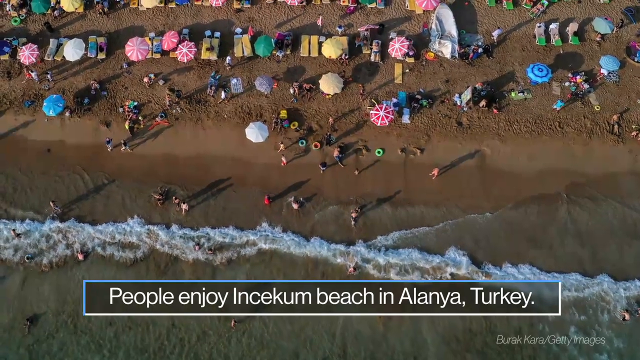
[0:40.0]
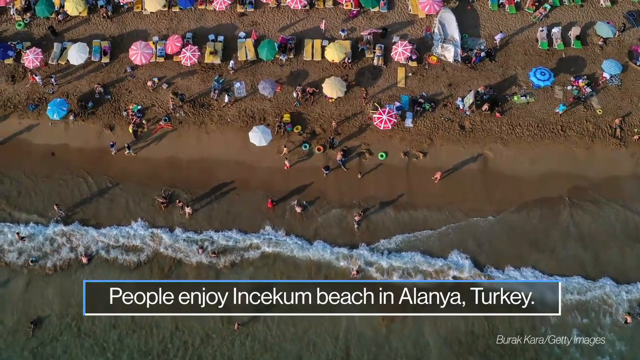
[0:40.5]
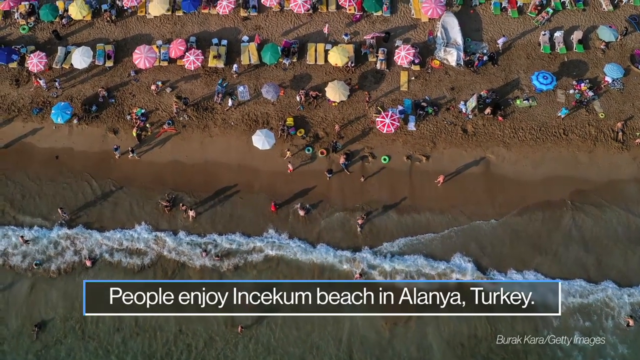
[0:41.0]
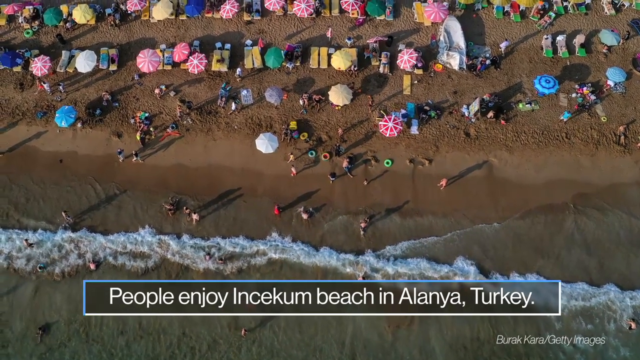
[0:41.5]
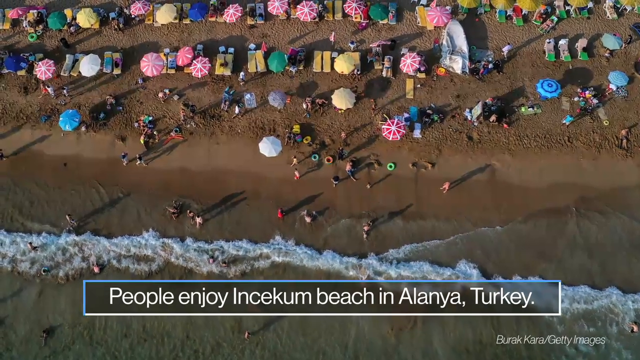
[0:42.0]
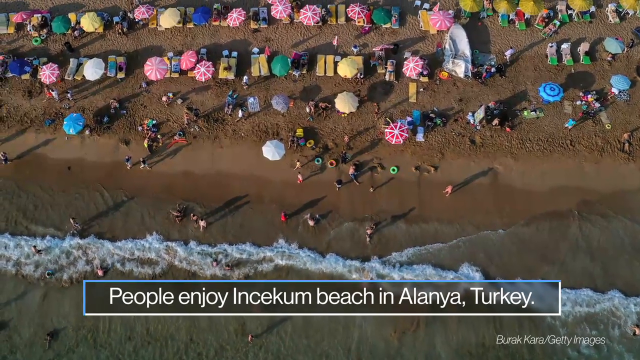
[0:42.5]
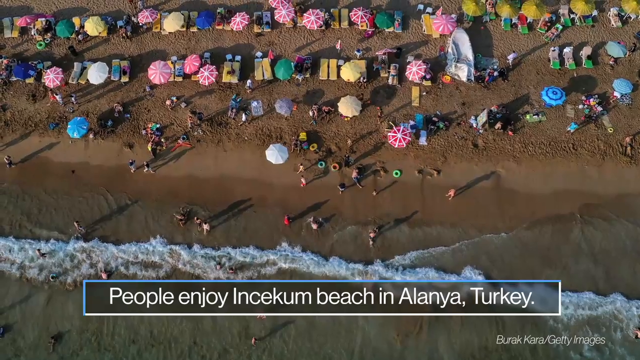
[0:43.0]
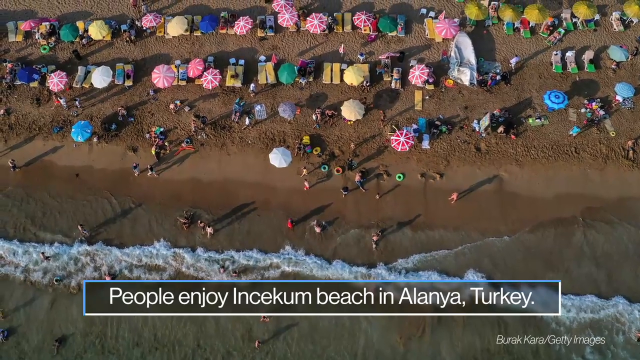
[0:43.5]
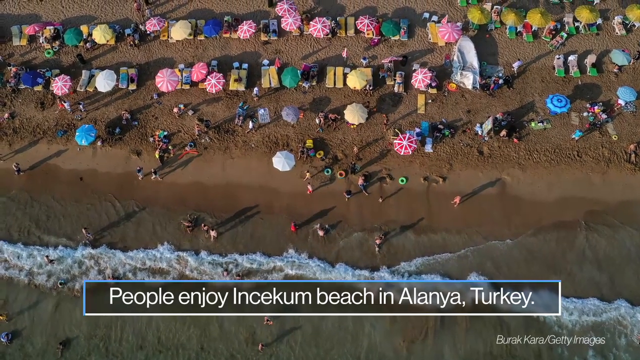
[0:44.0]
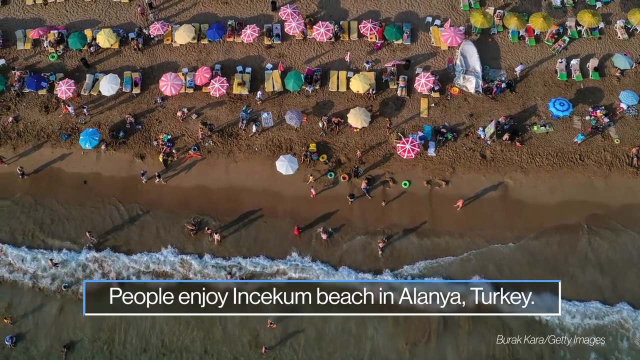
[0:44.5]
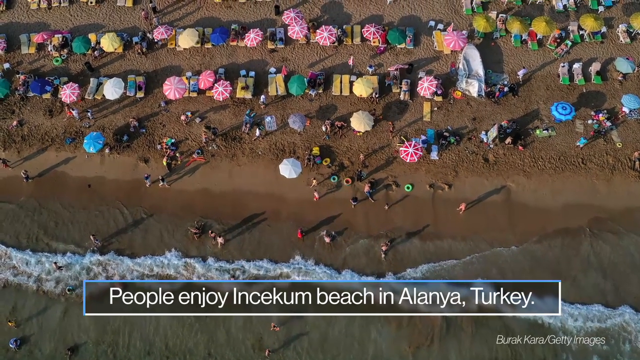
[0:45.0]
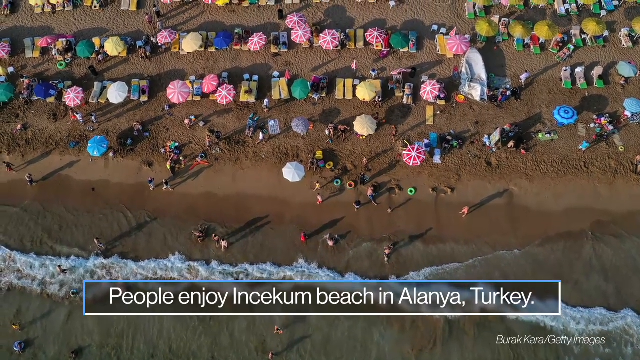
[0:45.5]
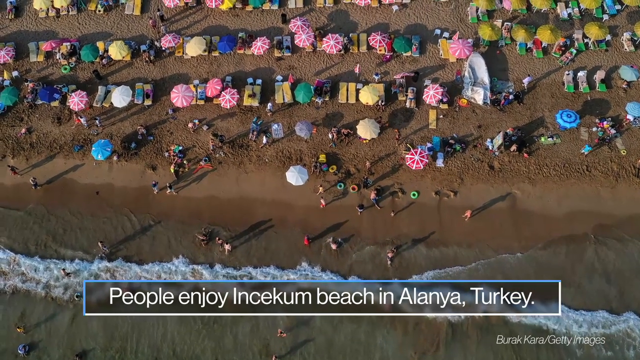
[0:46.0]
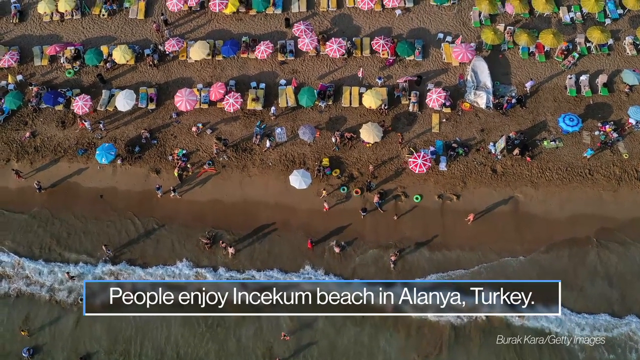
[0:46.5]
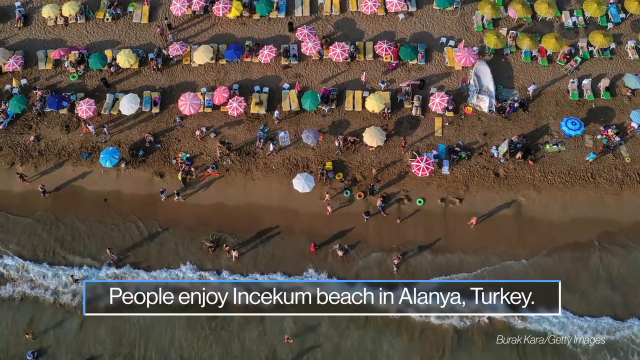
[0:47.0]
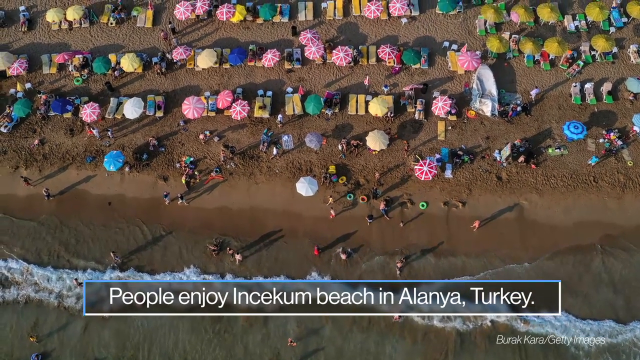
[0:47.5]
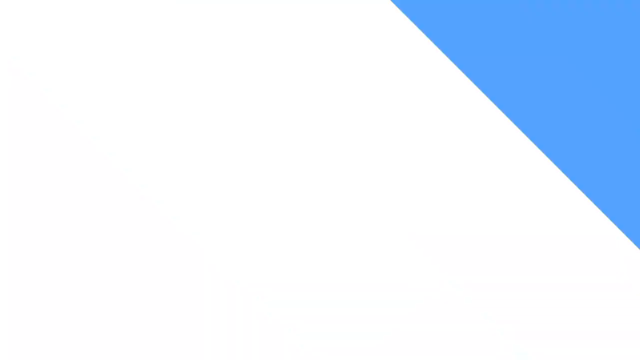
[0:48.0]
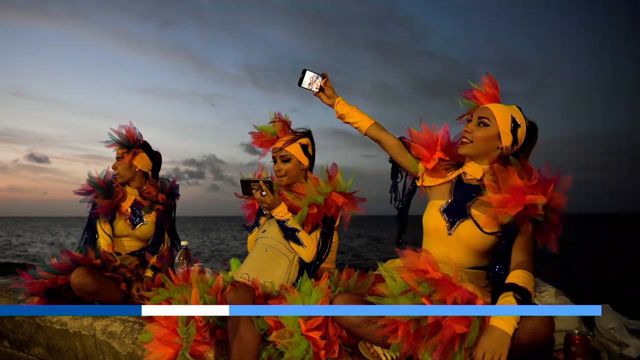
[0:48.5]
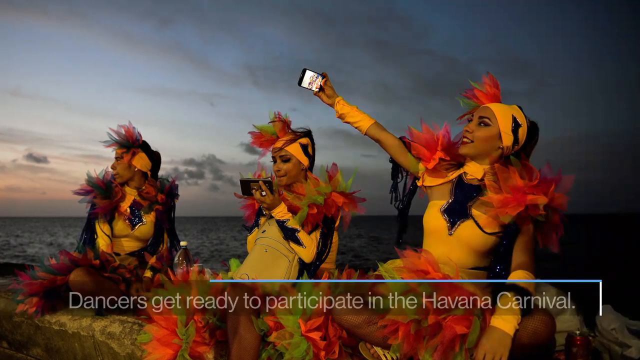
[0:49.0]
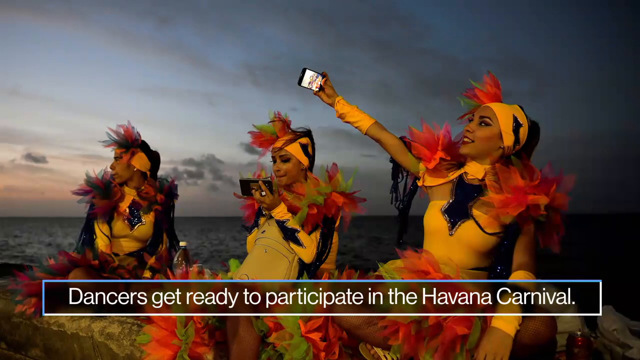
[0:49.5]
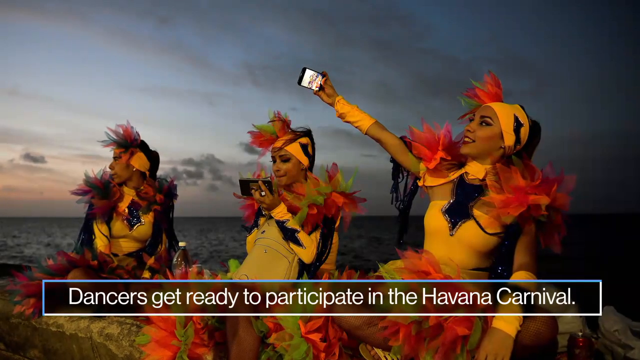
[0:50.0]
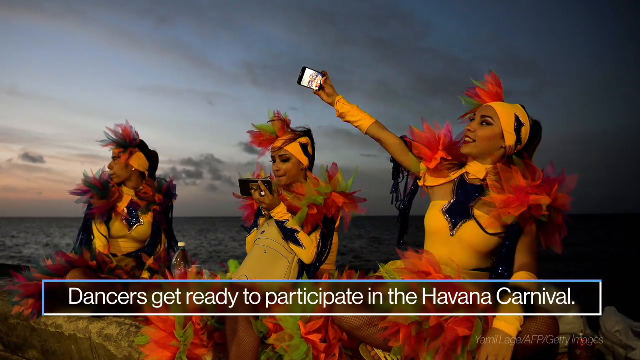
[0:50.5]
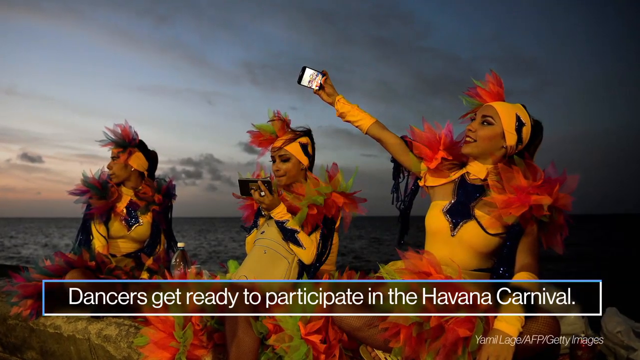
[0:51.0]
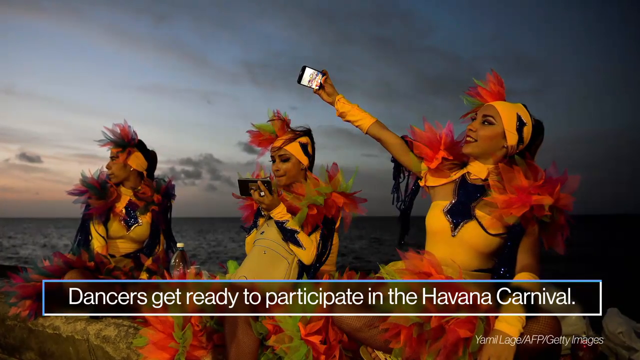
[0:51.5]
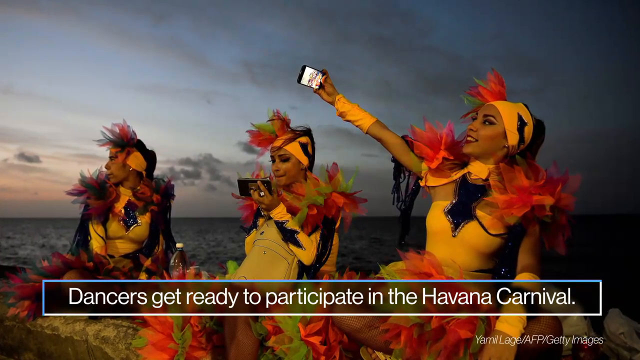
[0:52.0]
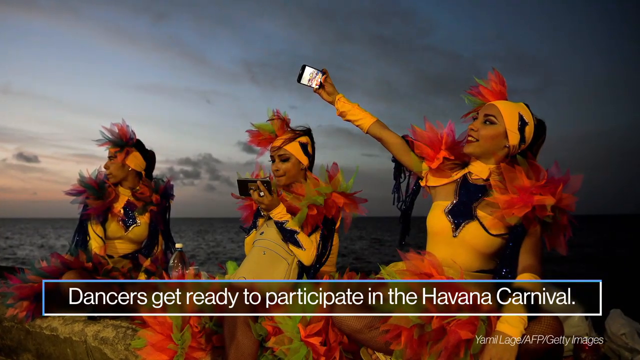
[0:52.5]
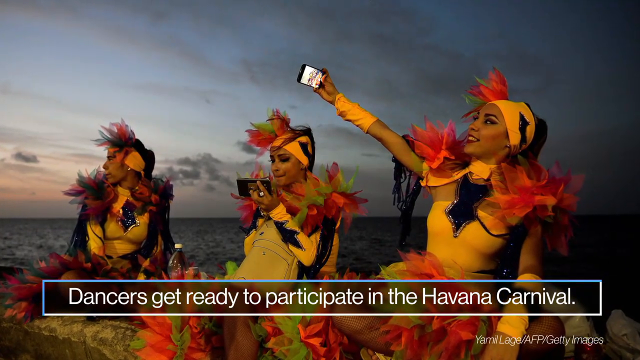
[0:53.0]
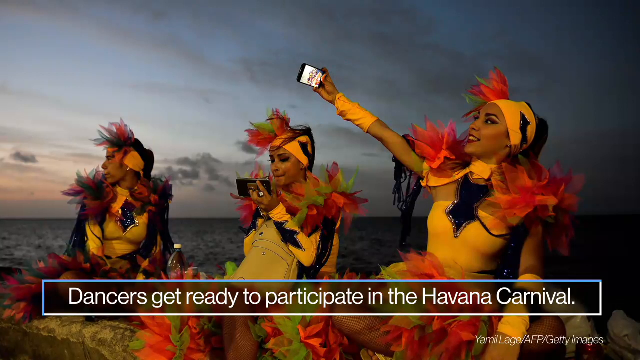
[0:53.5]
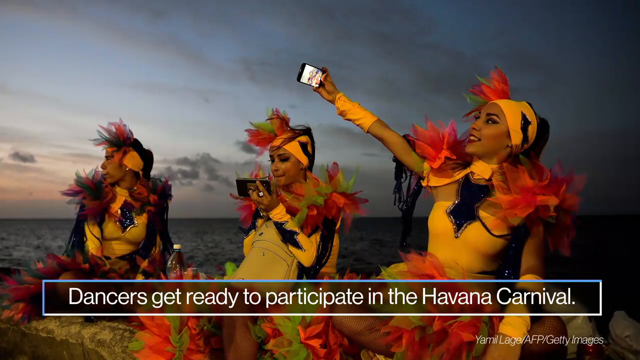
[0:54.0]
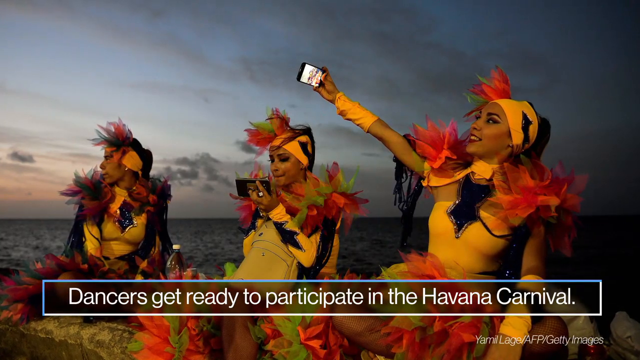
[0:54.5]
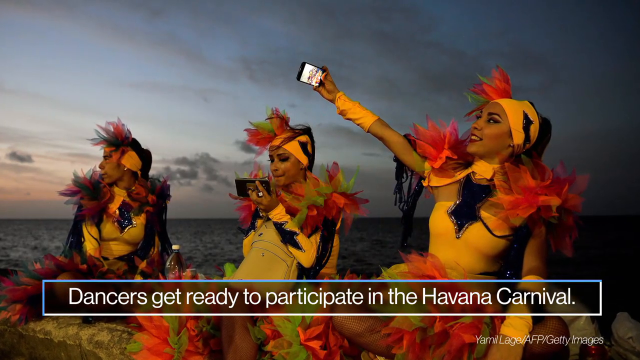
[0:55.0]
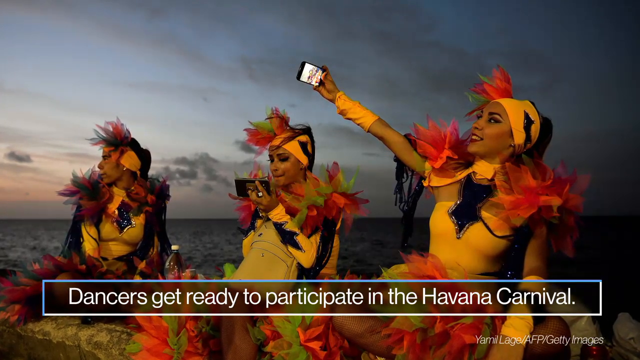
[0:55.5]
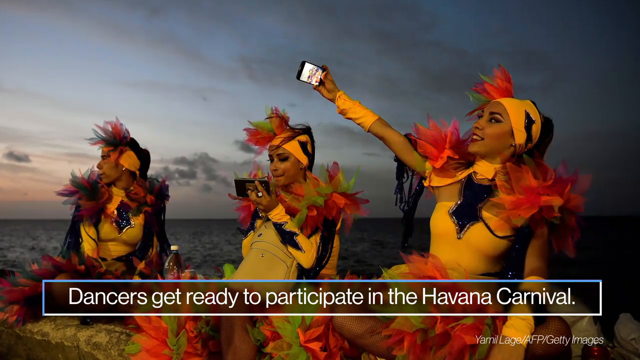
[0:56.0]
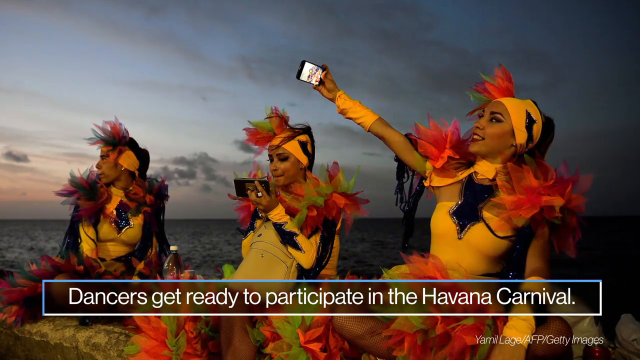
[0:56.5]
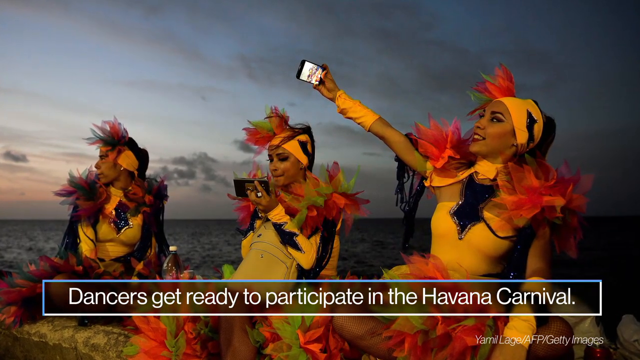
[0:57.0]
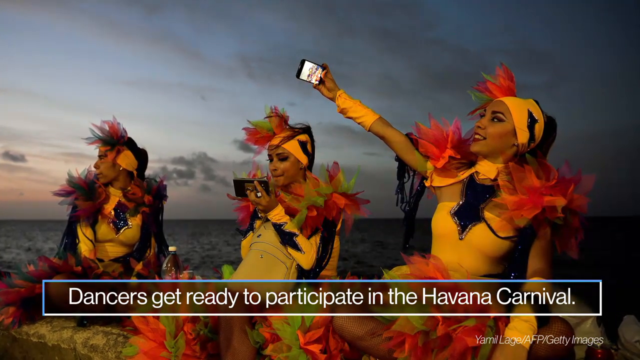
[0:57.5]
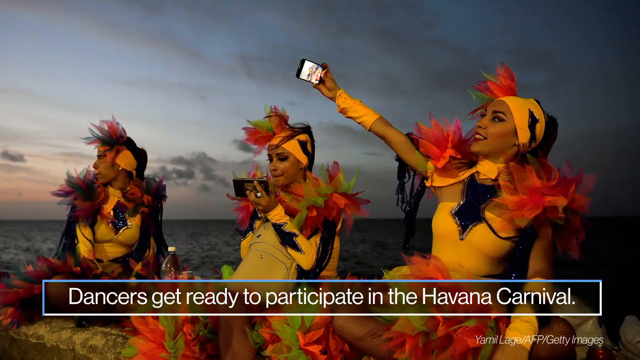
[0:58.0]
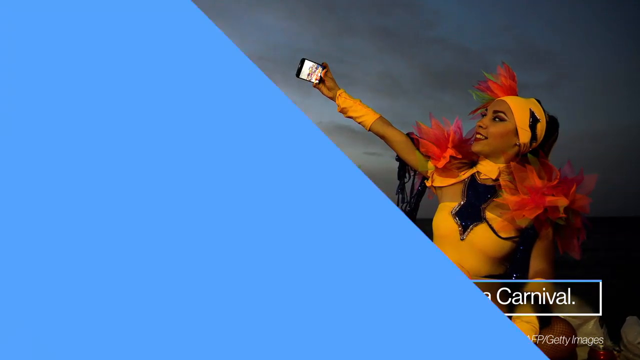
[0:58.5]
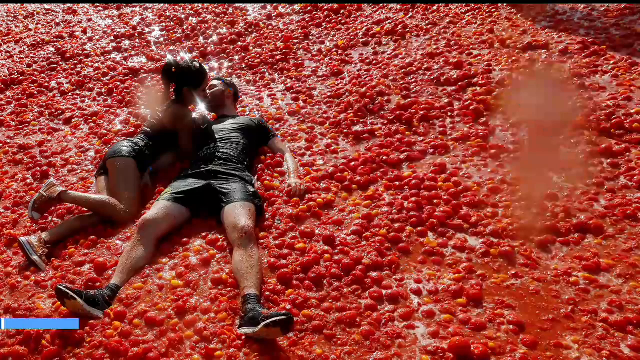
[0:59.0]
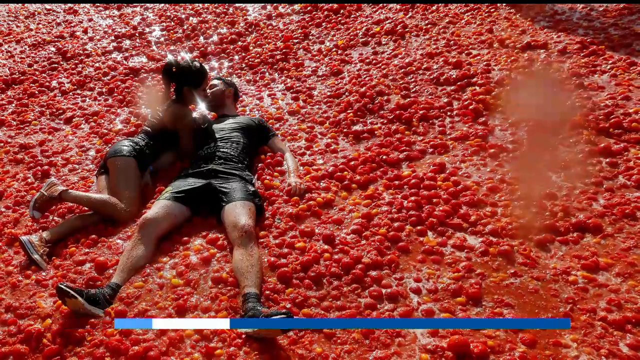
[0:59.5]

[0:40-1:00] The caption indicates that the beach is in Turkey. The image of the beach pans to the left, revealing more umbrellas and people walking beside some water. Another blue animation cuts across the screen to reveal a photo of three women who seem to be sitting at the side of a beach or possibly on top of a raft. The women wear yellow outfits with decorative features in brighter red and green. One of the women is taking a photo with her cell phone. The caption underneath says the women are dancers getting ready to participate in the Havana Carnival. Judging by the sky behind them, it is possibly sunset or sunrise. The woman on the left is looking behind her or to the side, and the woman in the middle is looking at her phone, possibly using it as a mirror.